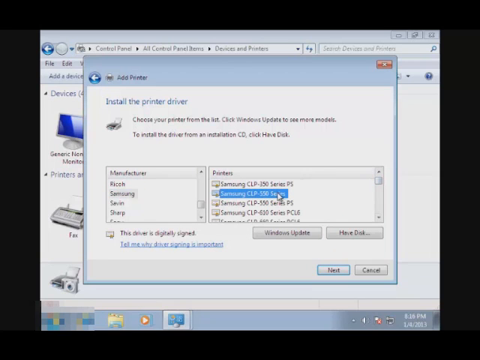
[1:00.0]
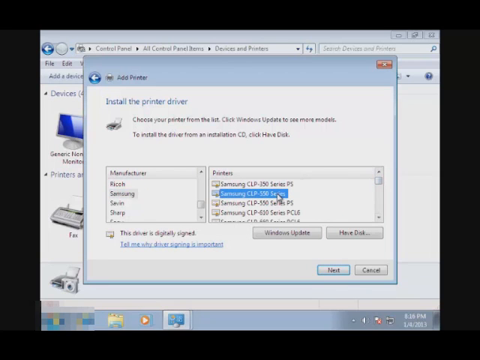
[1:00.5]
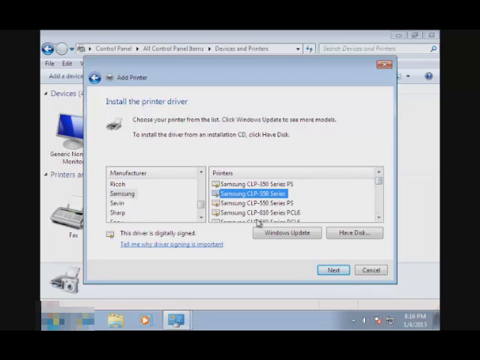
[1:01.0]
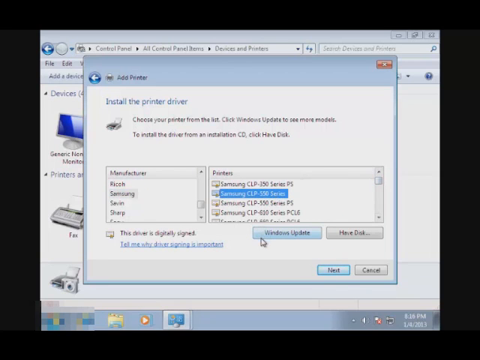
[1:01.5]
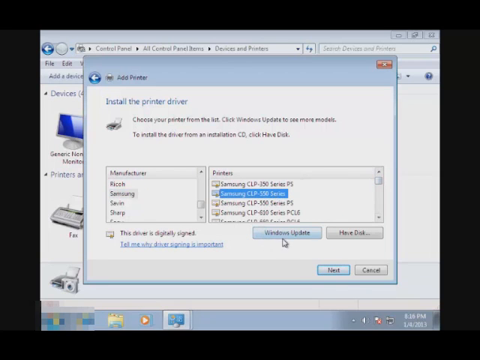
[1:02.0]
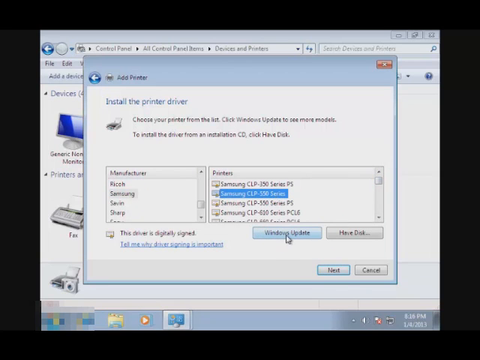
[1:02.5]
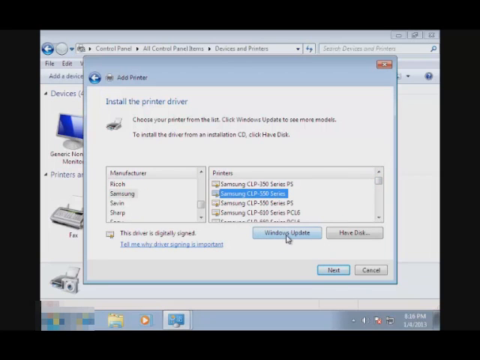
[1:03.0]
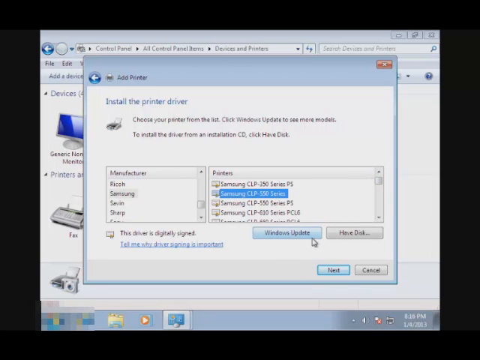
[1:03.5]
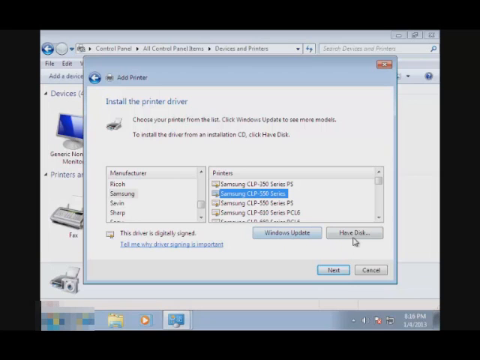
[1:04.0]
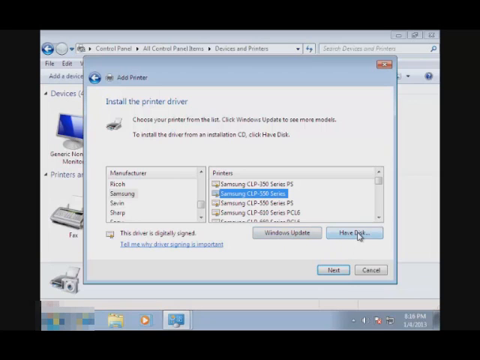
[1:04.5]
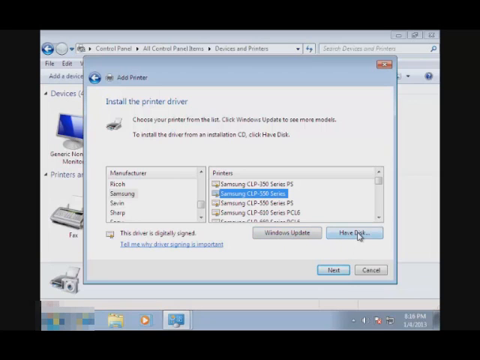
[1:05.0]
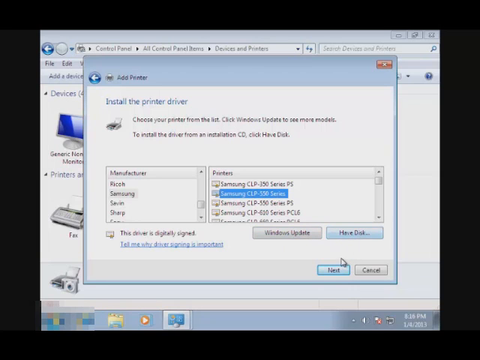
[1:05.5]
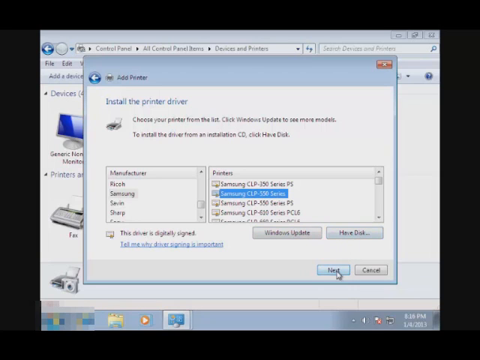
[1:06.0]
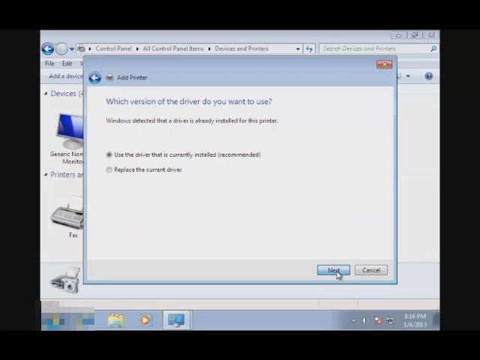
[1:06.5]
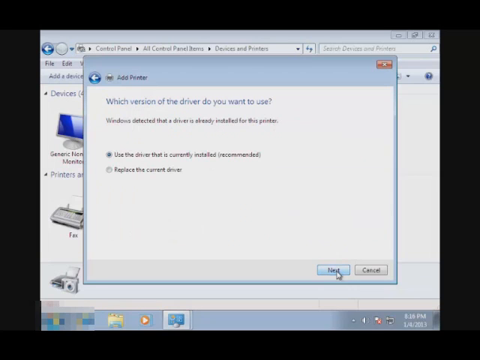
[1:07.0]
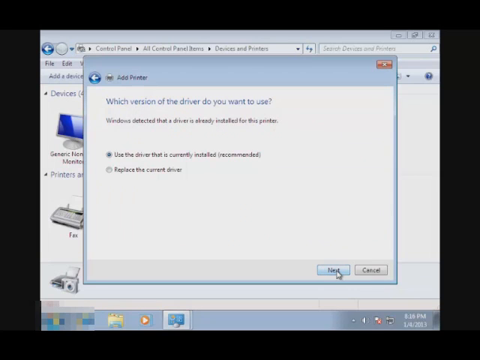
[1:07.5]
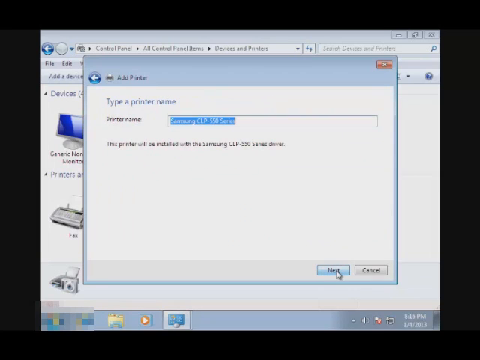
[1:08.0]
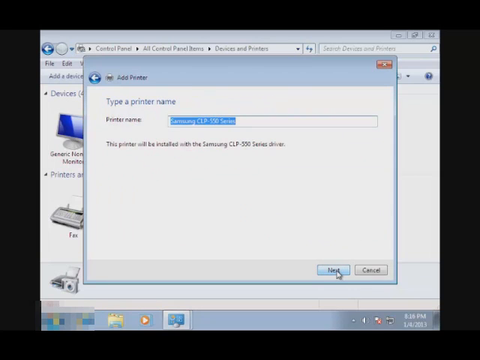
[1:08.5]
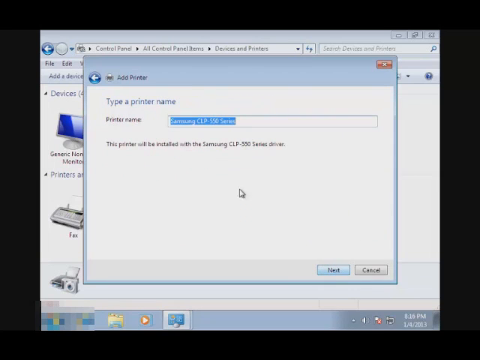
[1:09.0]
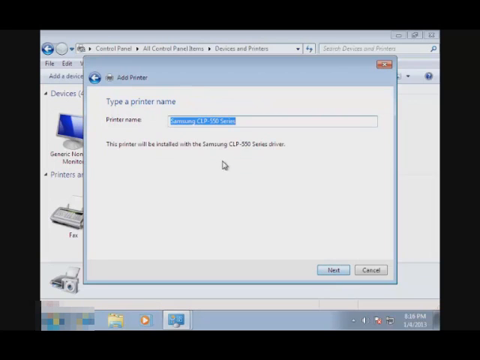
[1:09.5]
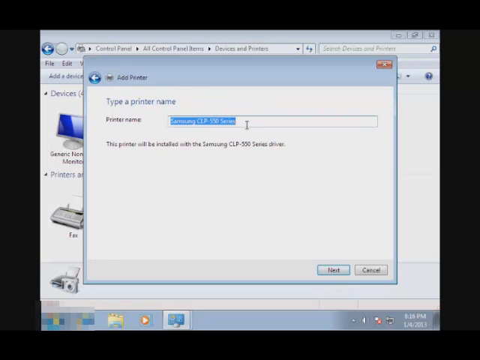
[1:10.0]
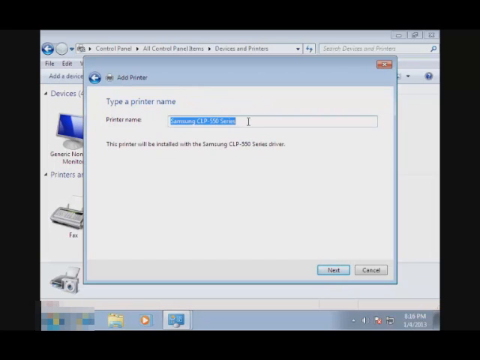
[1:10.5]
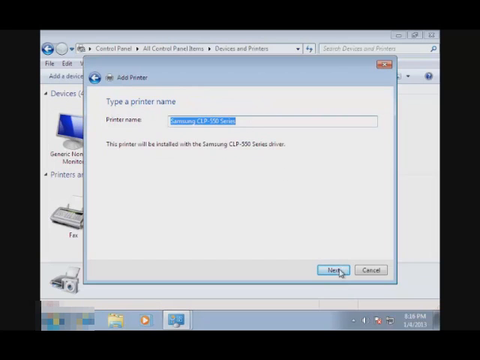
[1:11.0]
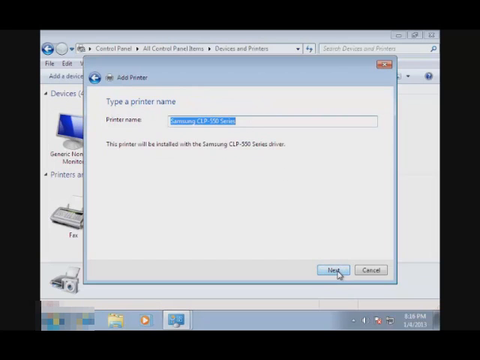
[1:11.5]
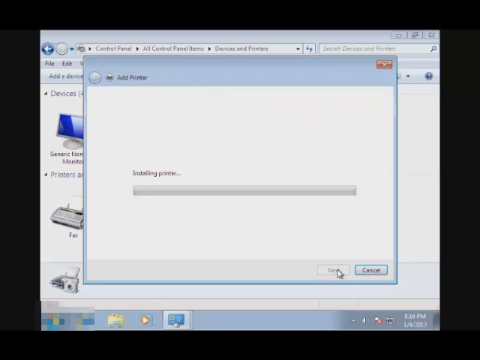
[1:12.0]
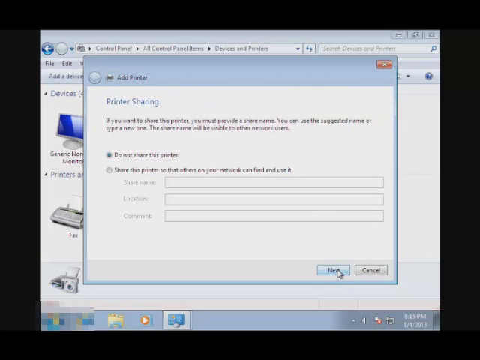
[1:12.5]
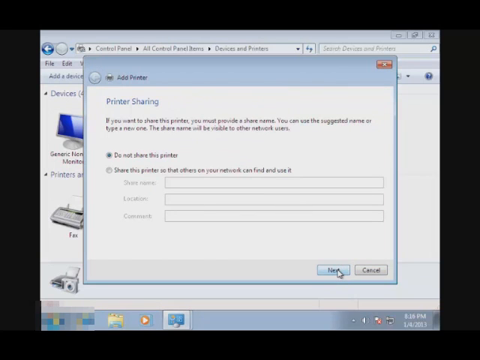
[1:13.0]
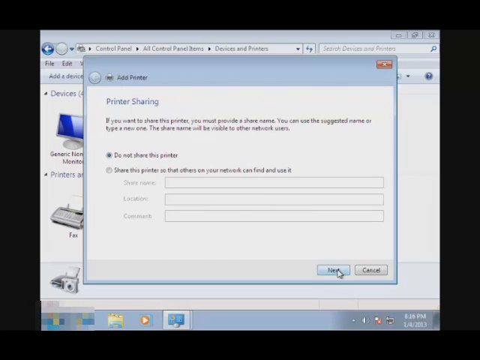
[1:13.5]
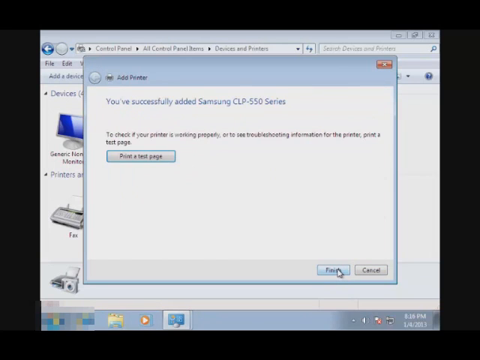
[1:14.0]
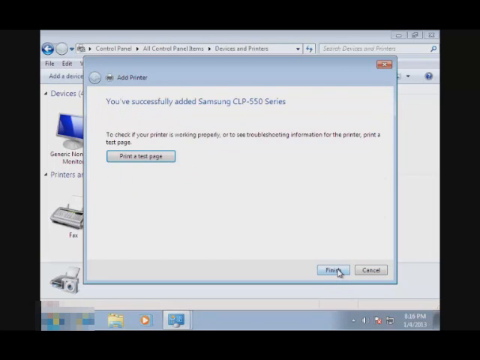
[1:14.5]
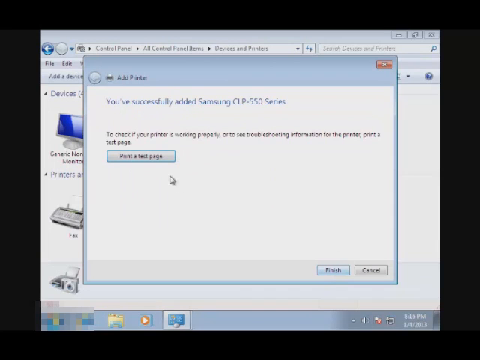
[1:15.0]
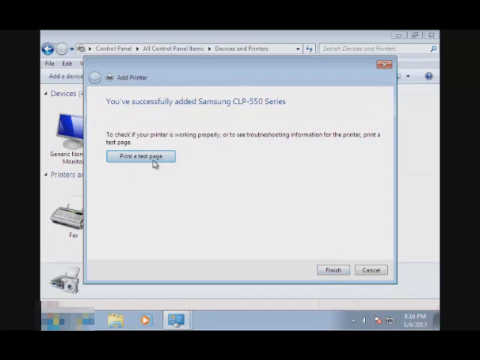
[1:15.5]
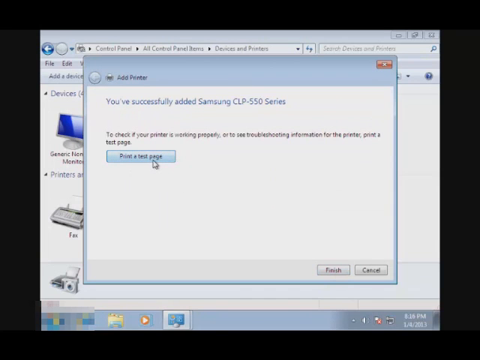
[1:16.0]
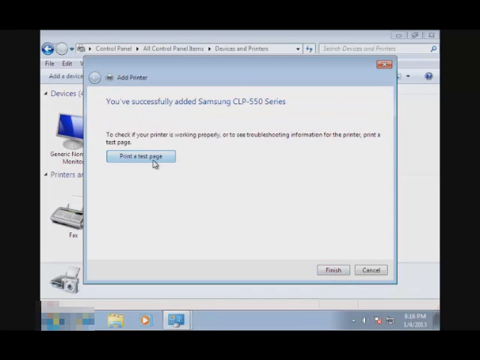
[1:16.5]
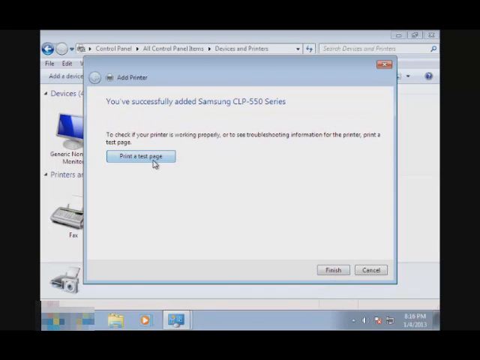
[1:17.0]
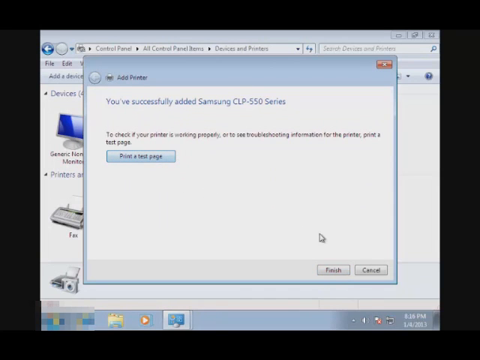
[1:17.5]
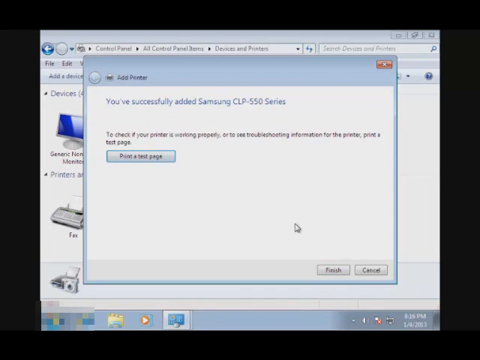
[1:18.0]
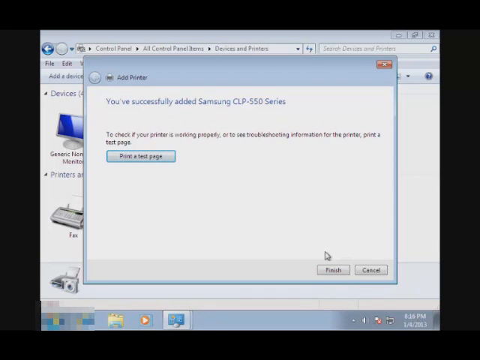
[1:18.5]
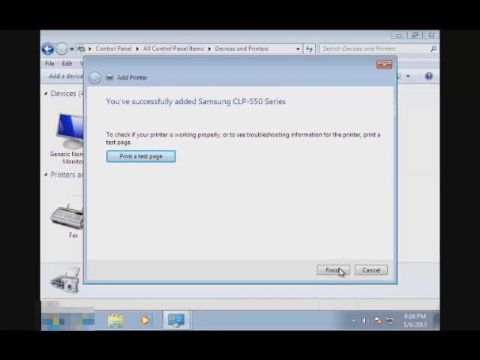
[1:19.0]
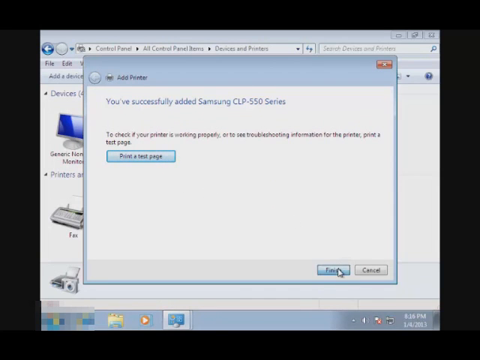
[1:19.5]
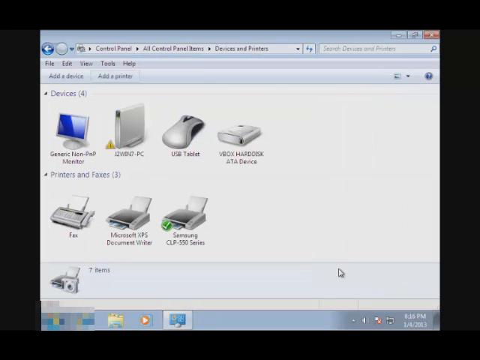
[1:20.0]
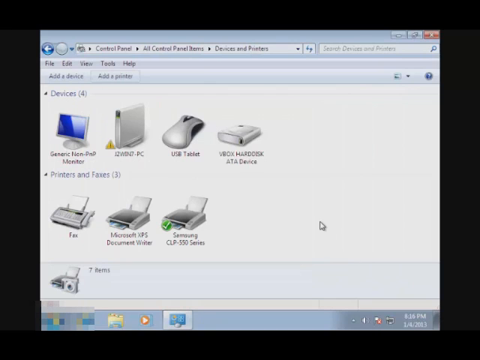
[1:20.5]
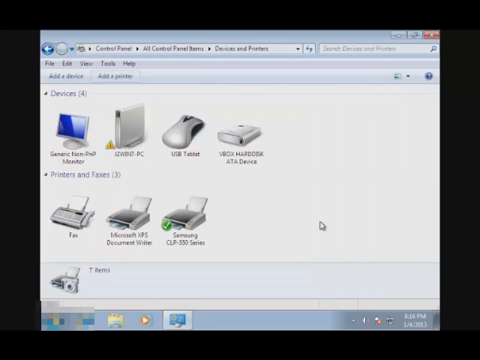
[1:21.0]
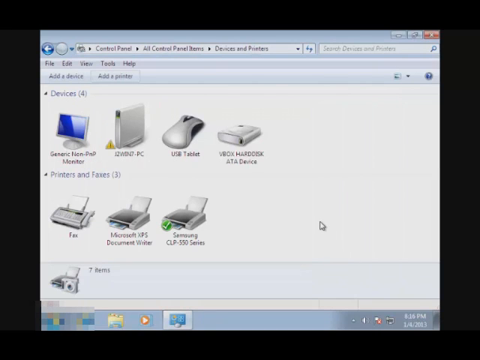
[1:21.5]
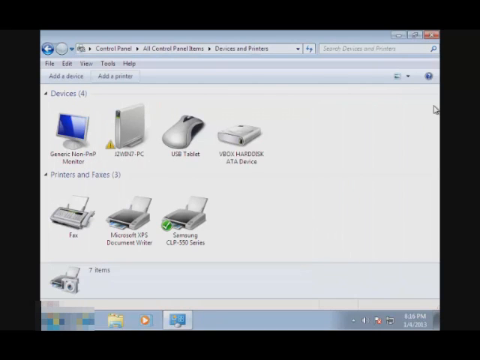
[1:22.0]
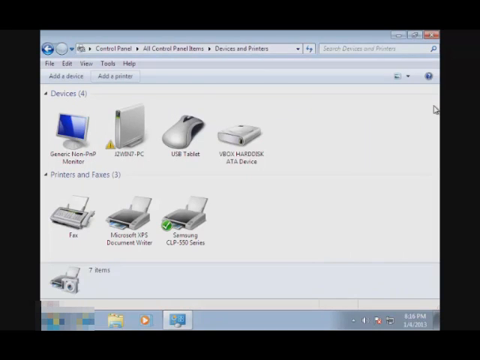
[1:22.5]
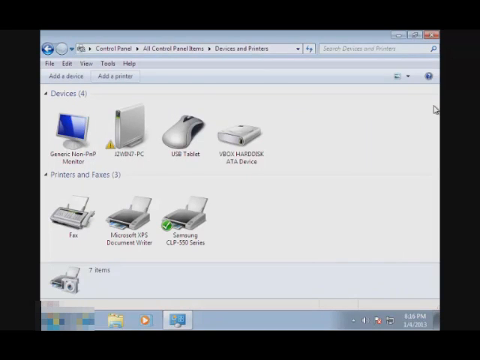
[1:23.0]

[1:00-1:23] He continues installing the printer on the Samsung screen, picking a Samsung driver to match his printer type: Samsung is selected on the left, the model on the right, and then he goes to the bottom and hits submit, and a driver loads, possibly a general-purpose driver for that brand. The next screen states that the Samsung CLP 550 series printer was successfully added. He sets it up, and it is listed in his devices; it looks like he is going to open it from there and probably set it as the default.